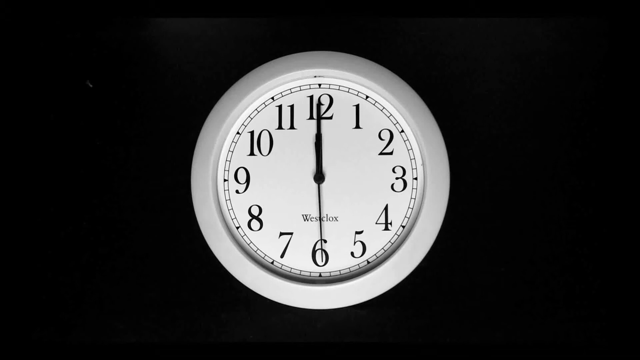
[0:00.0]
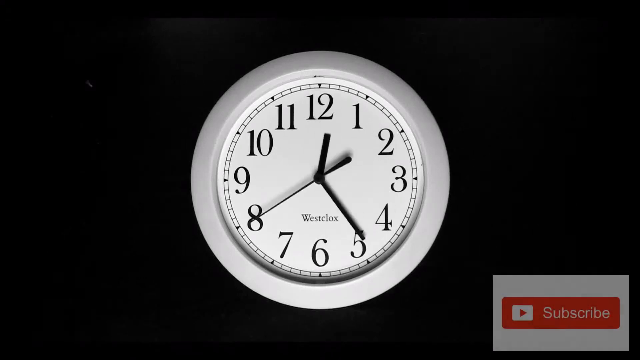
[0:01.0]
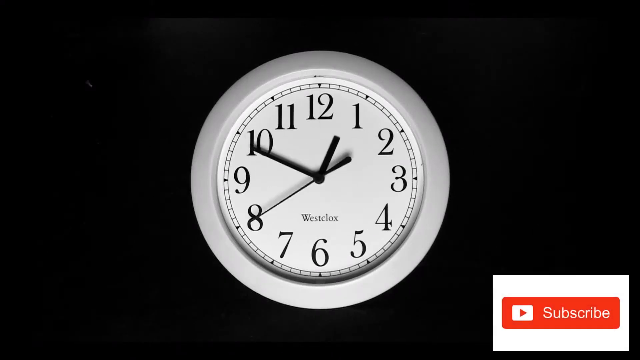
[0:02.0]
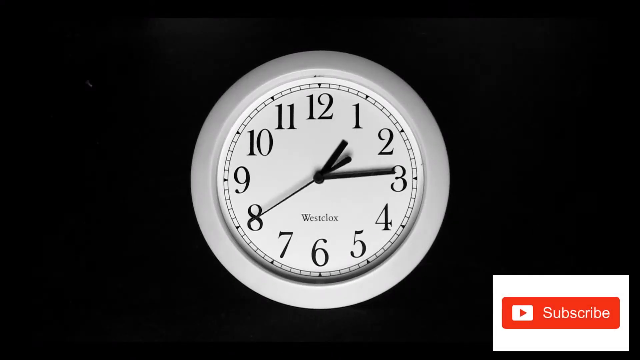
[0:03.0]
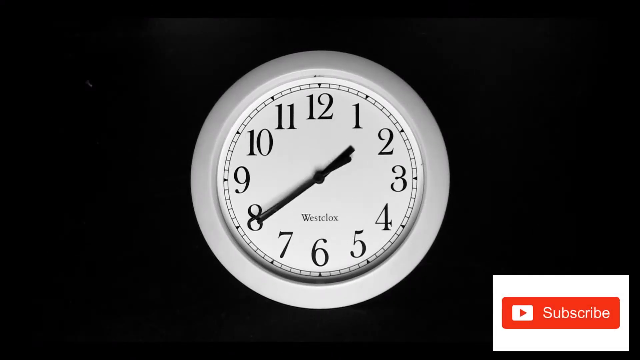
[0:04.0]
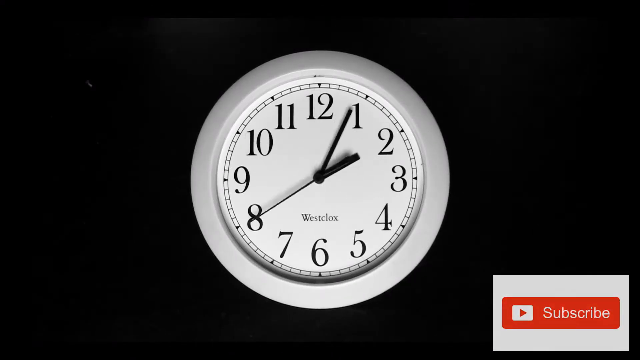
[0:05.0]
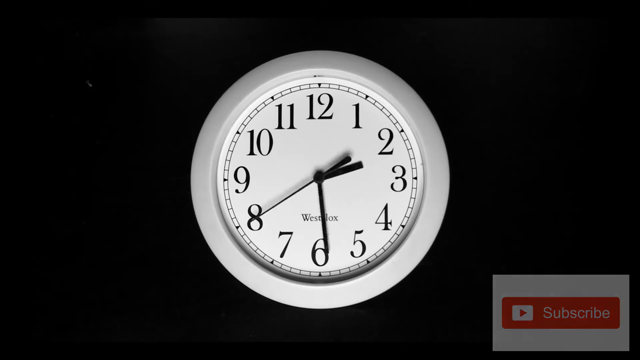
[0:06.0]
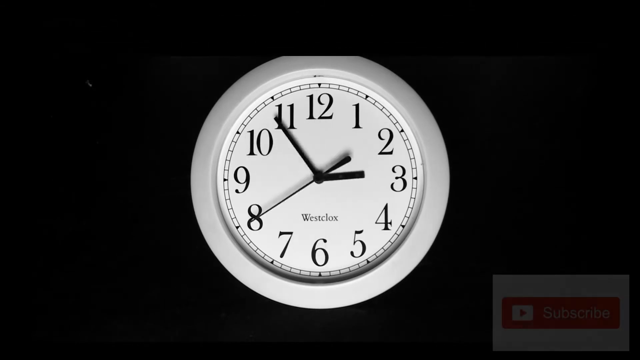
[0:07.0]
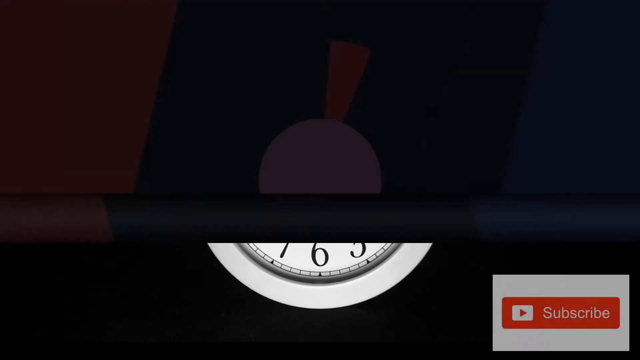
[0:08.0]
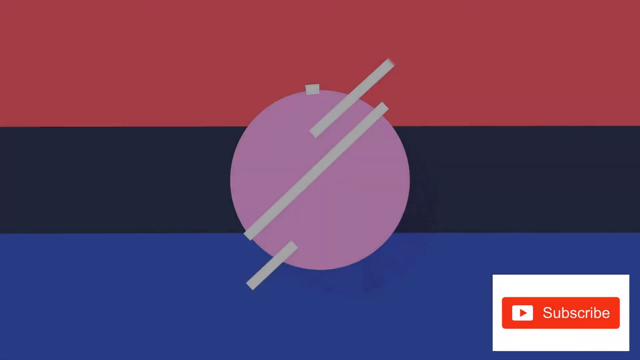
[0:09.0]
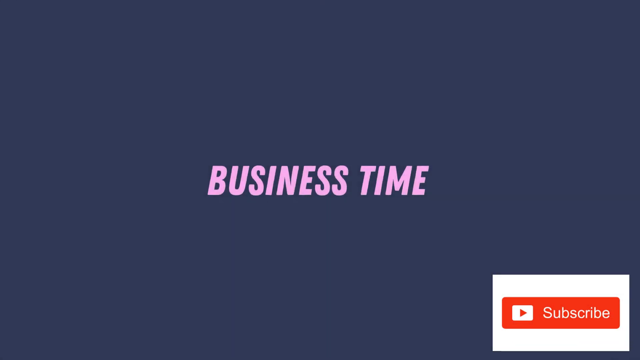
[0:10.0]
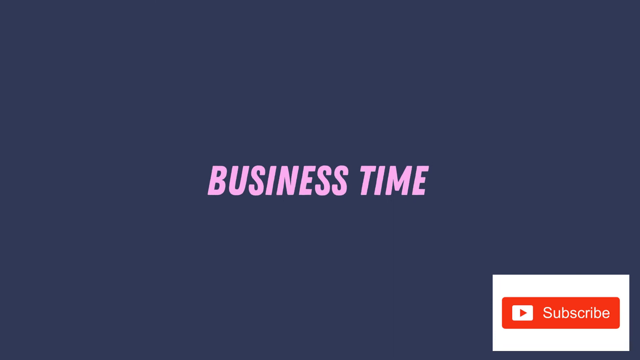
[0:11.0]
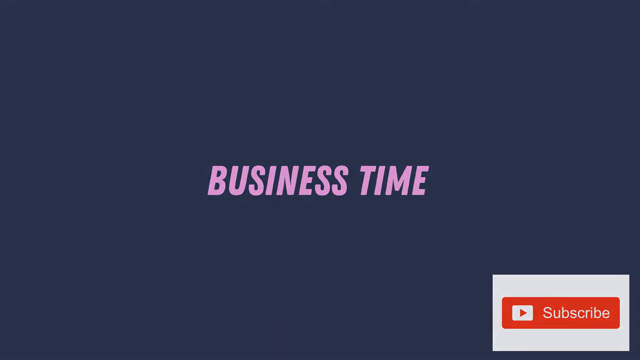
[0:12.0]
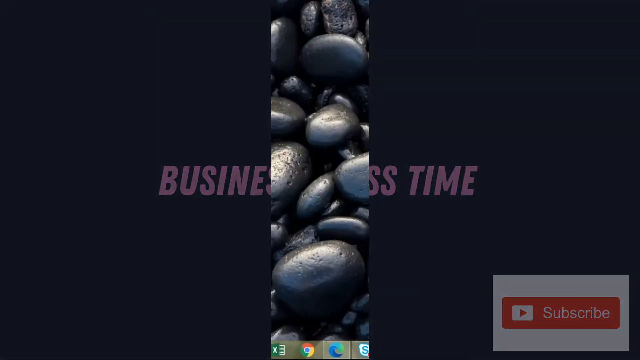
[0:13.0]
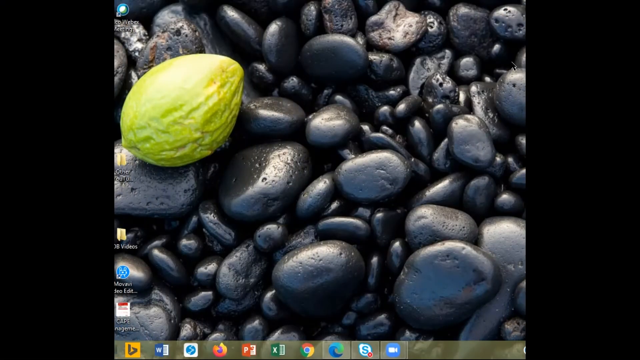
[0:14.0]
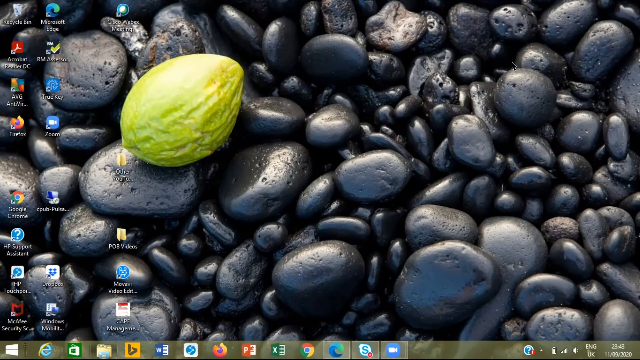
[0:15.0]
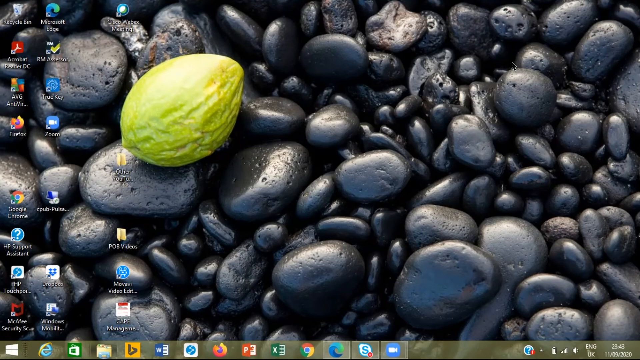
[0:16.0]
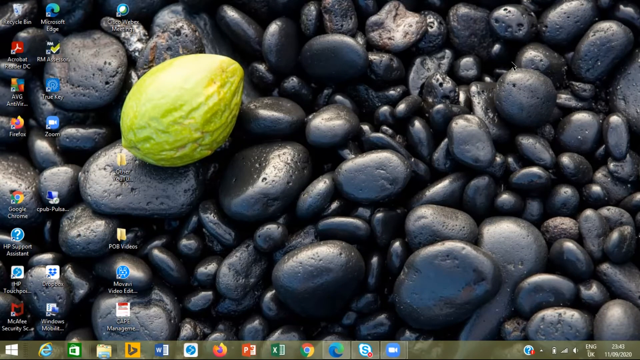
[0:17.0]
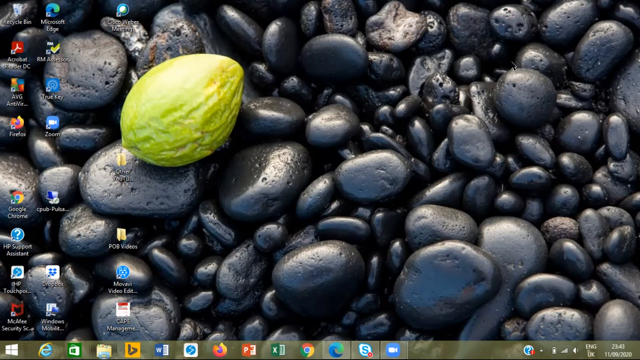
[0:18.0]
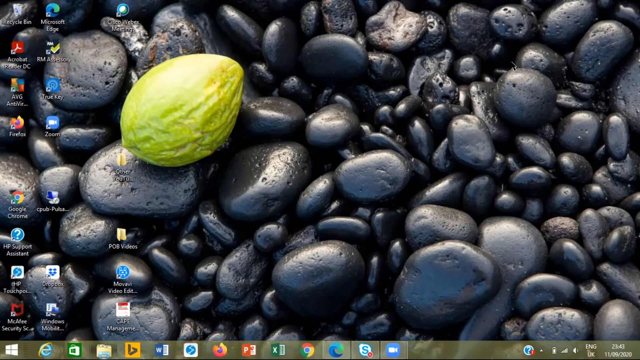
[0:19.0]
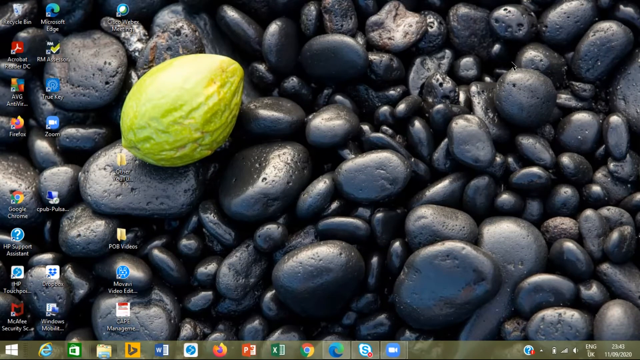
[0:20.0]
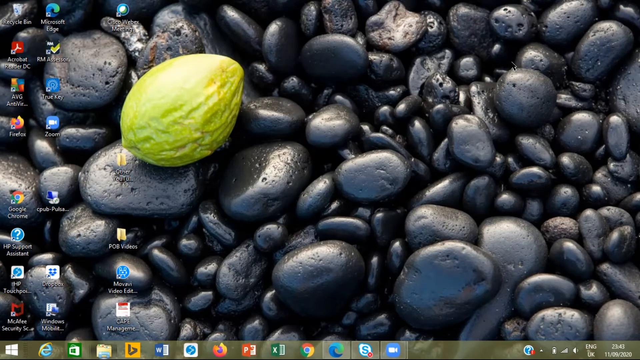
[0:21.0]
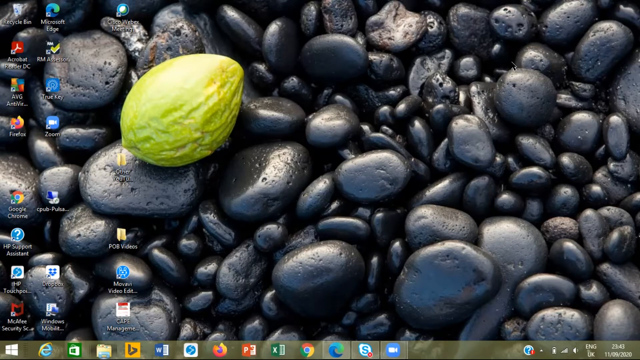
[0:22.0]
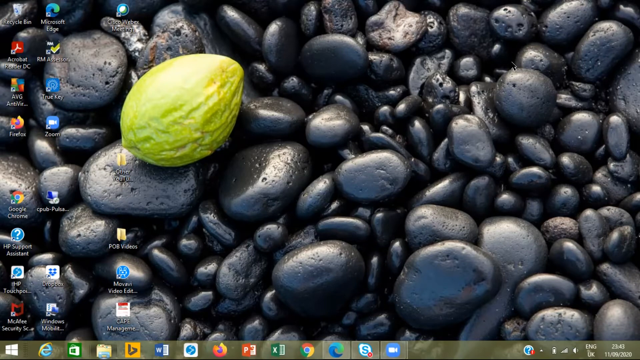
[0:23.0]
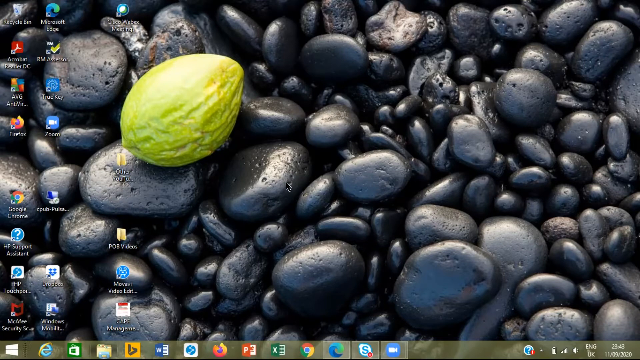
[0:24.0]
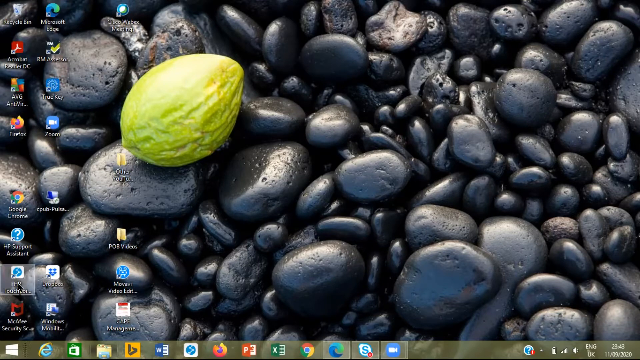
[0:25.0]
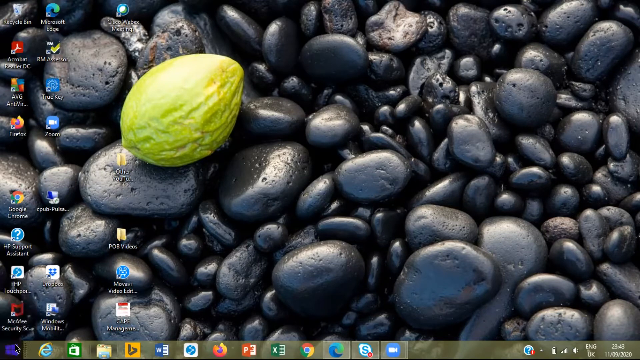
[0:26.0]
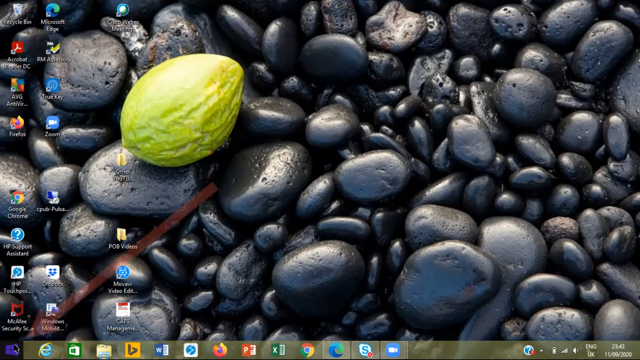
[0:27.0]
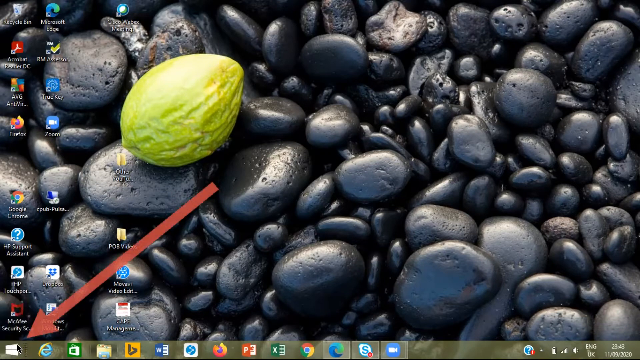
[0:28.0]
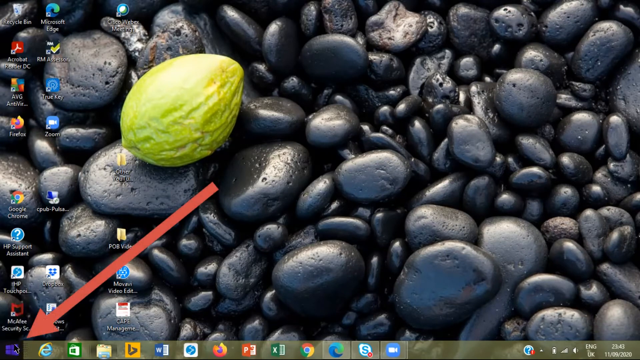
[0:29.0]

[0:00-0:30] Against a black background is a picture of a very cheap clock. The clock is all white, with black numbers and markings. The clock's hand moves very fast through the numbers, making four or five rounds. The clock then goes away as the black screen kind of comes down from the top to the bottom. A kind of more retro screen appears: a transition with lots of colors, red, blues and purples, that looks very 80s-ish. A circle kind of explodes outward in the same teal, purple and blue color. Then comes a dark blue background with the words "business time" in a pinkish-purple color. That screen splits down the middle, one half going left and the other going right, revealing an image of a bunch of black rocks with something green on it, possibly a fruit. The view is then of someone's computer home screen, with icons that can be clicked on.